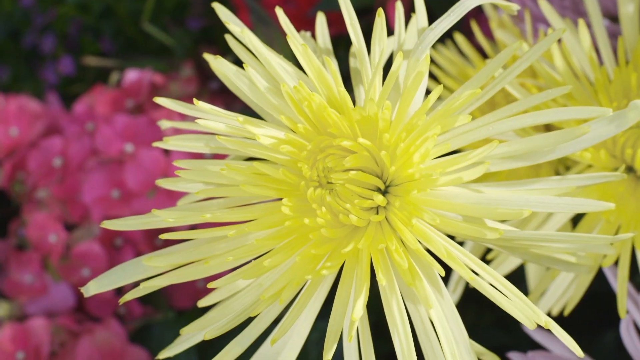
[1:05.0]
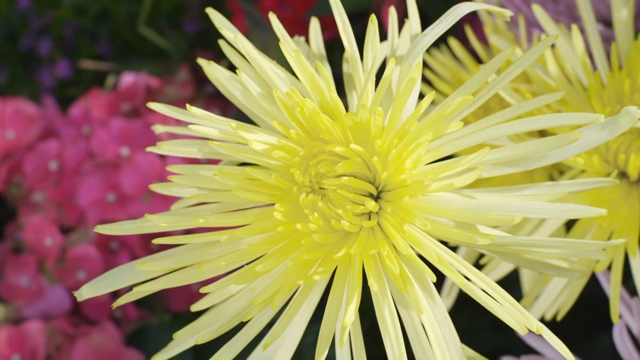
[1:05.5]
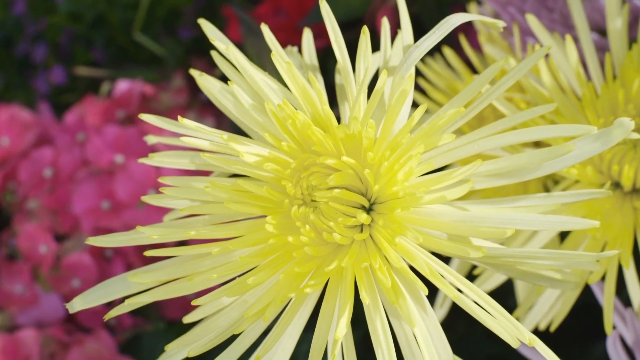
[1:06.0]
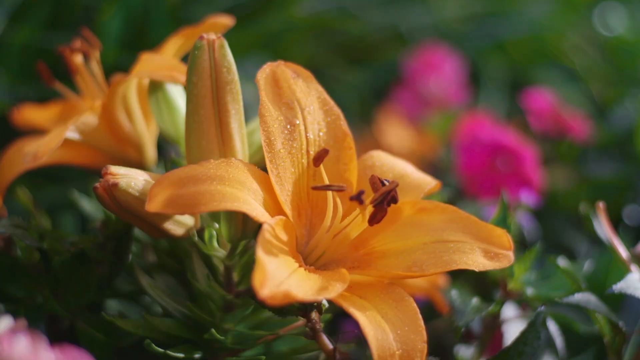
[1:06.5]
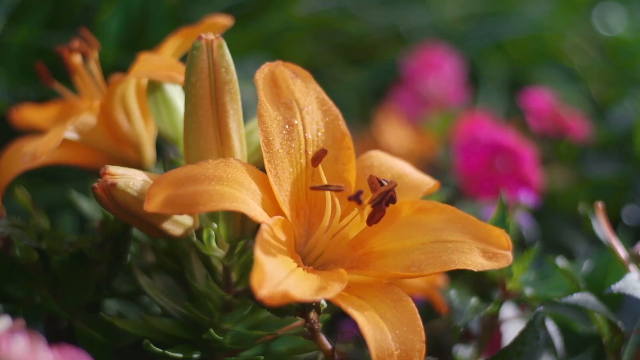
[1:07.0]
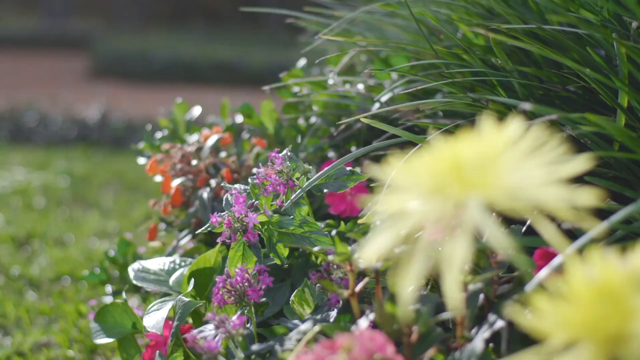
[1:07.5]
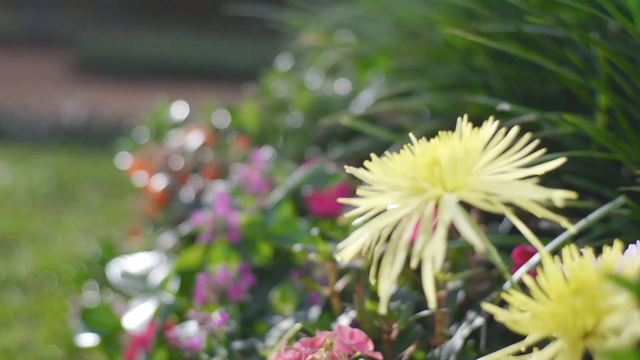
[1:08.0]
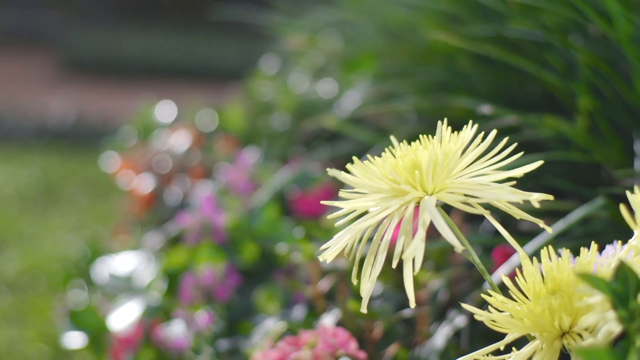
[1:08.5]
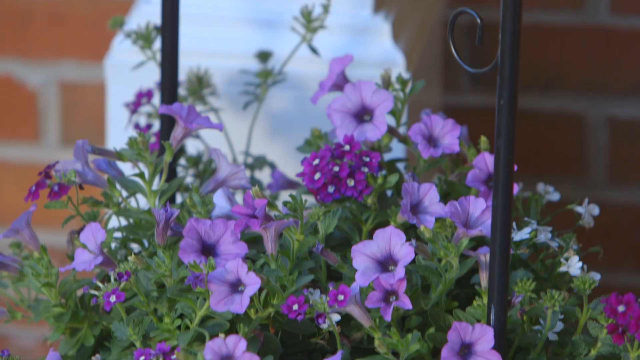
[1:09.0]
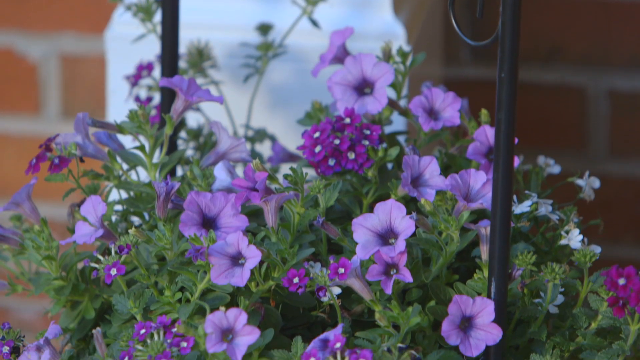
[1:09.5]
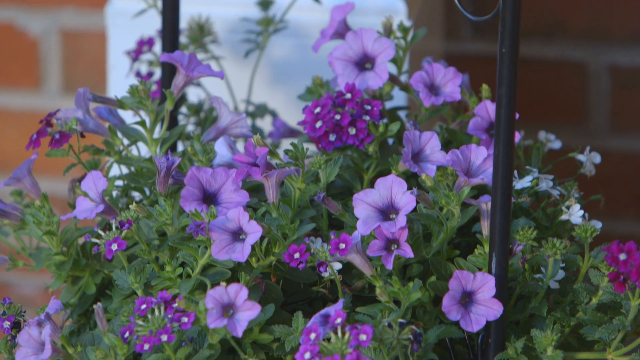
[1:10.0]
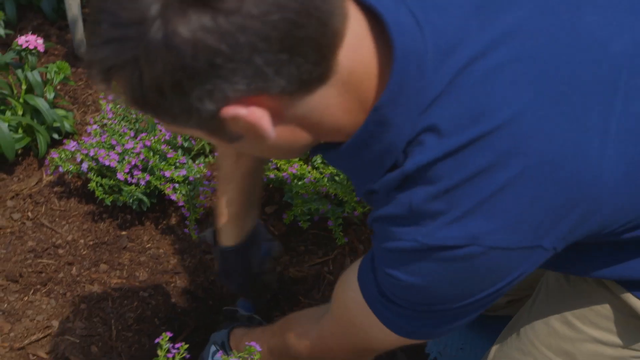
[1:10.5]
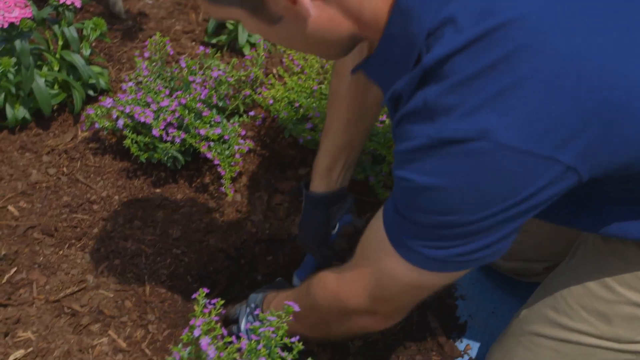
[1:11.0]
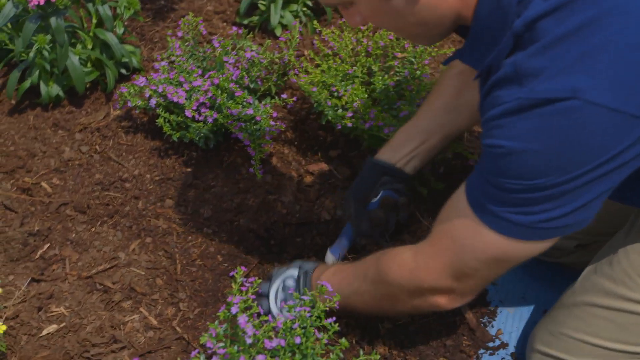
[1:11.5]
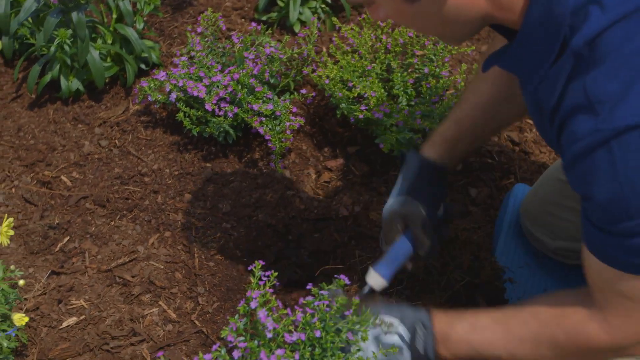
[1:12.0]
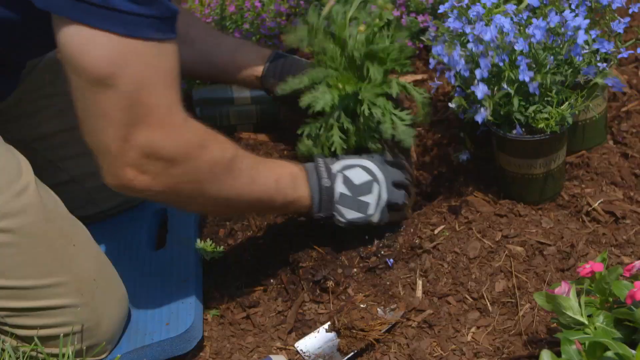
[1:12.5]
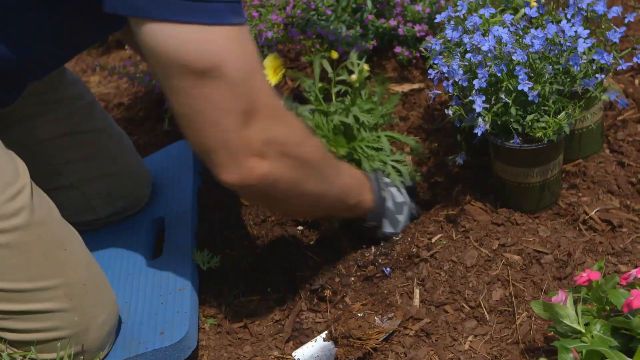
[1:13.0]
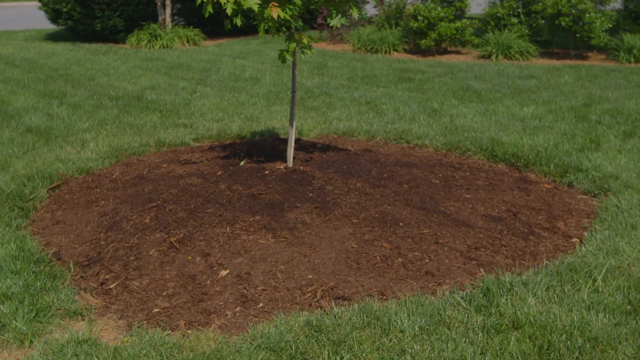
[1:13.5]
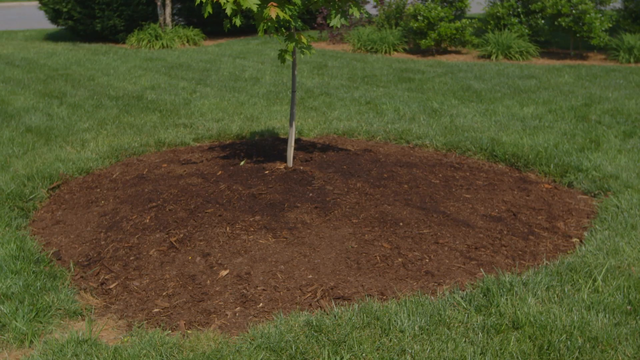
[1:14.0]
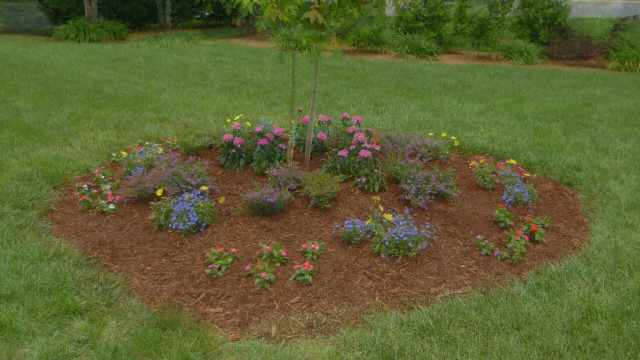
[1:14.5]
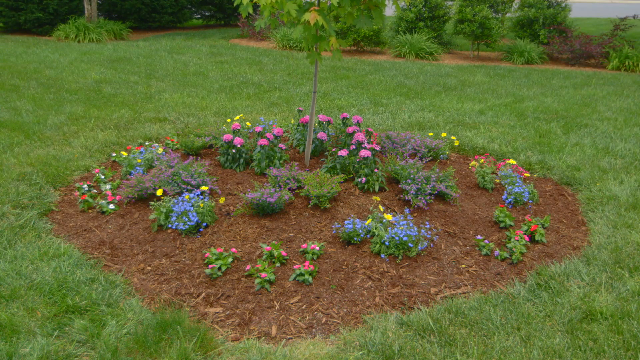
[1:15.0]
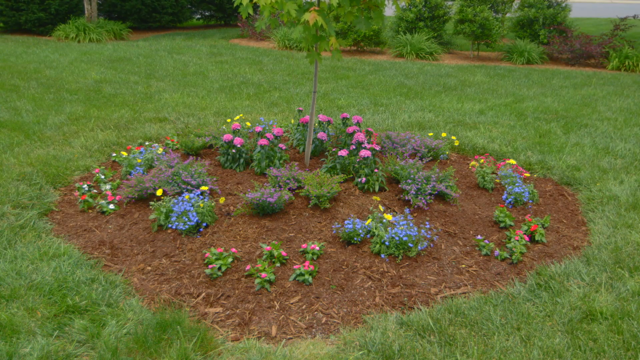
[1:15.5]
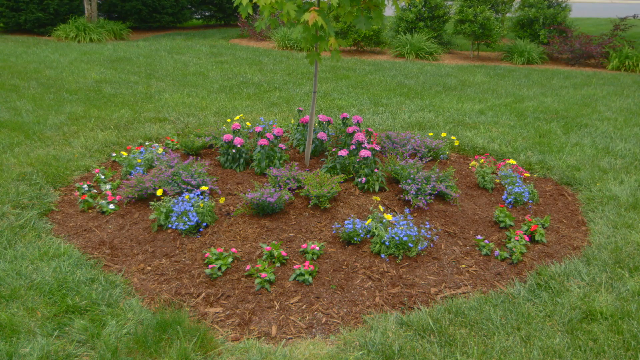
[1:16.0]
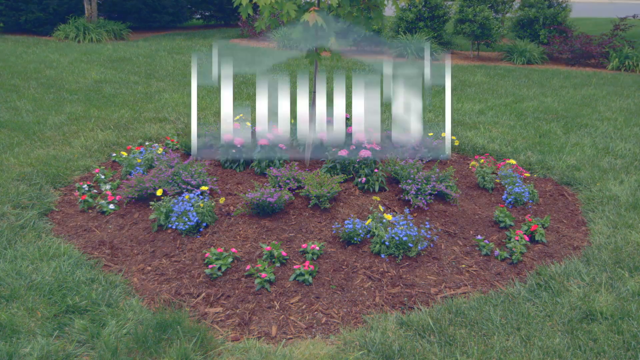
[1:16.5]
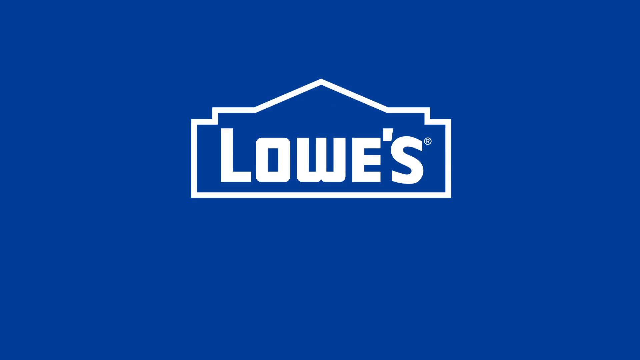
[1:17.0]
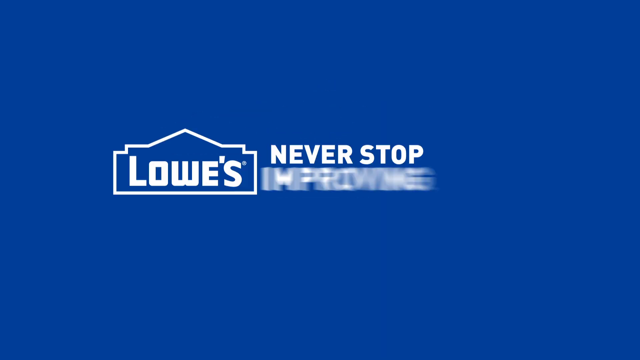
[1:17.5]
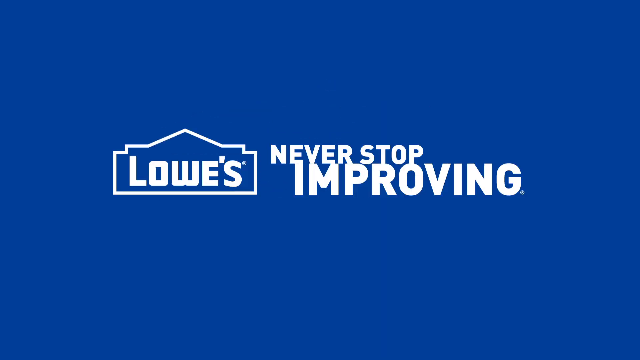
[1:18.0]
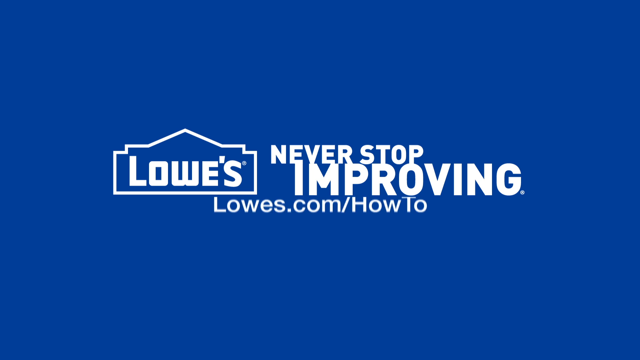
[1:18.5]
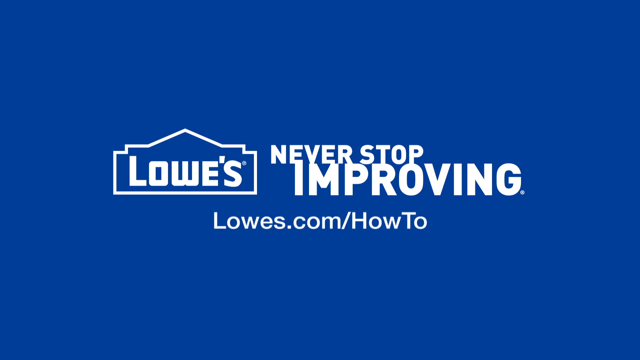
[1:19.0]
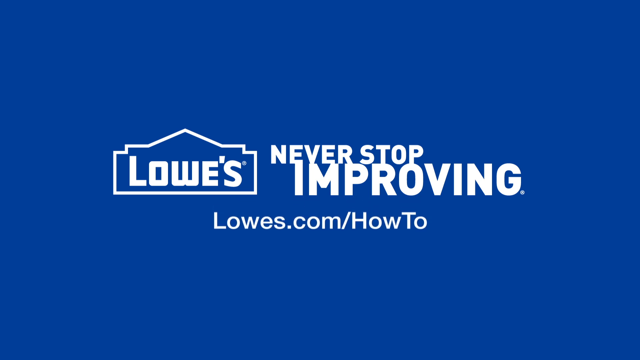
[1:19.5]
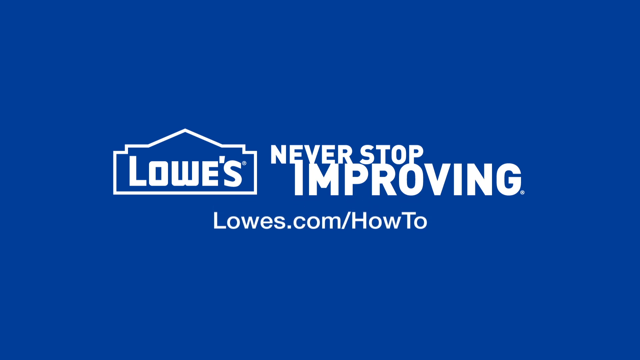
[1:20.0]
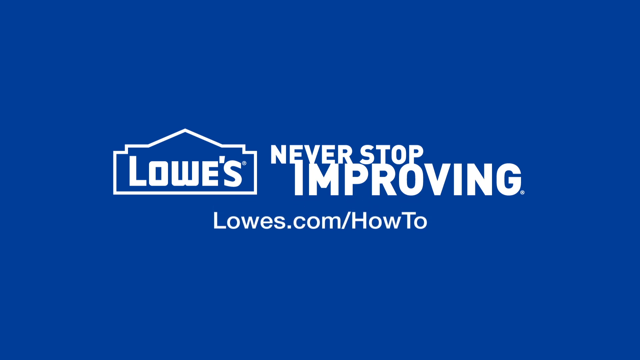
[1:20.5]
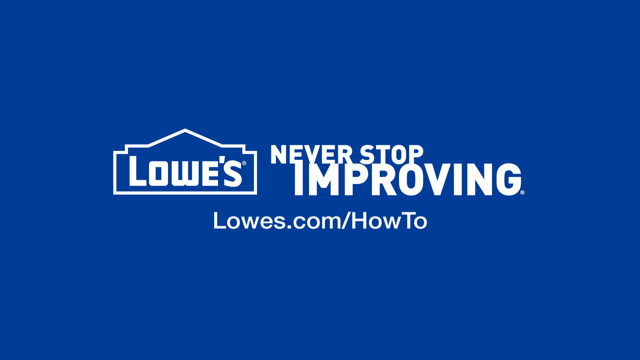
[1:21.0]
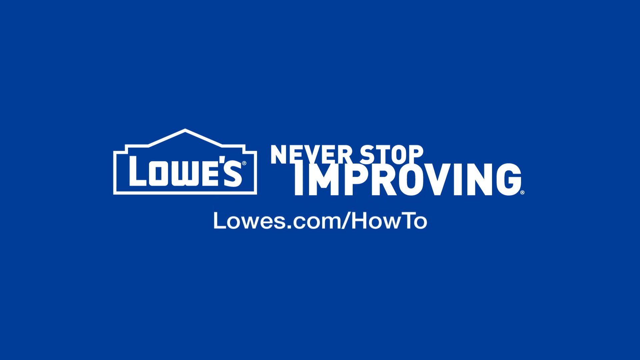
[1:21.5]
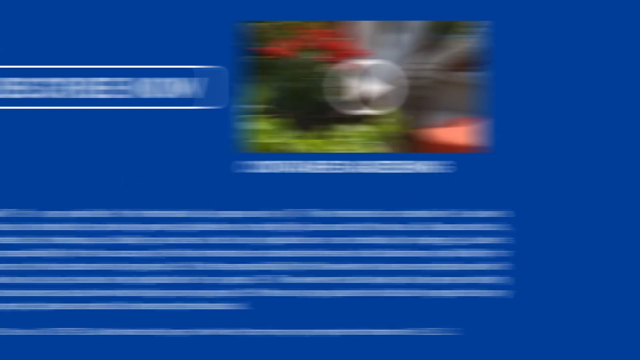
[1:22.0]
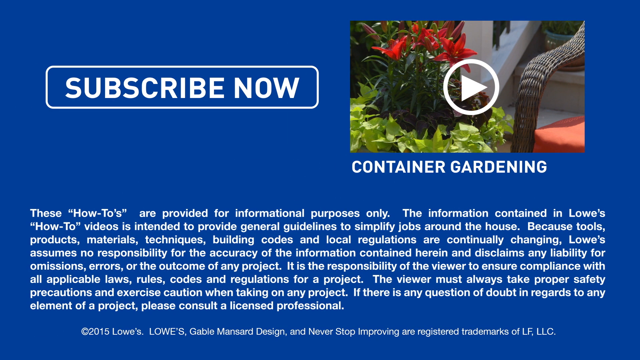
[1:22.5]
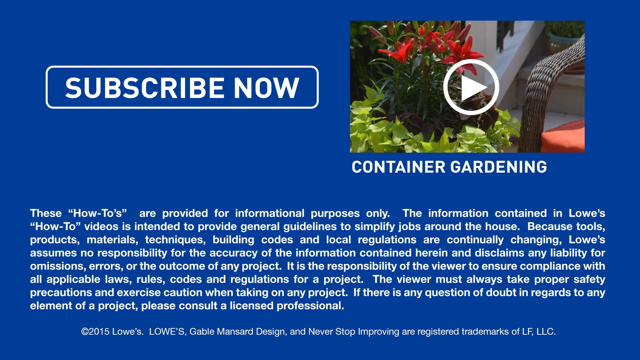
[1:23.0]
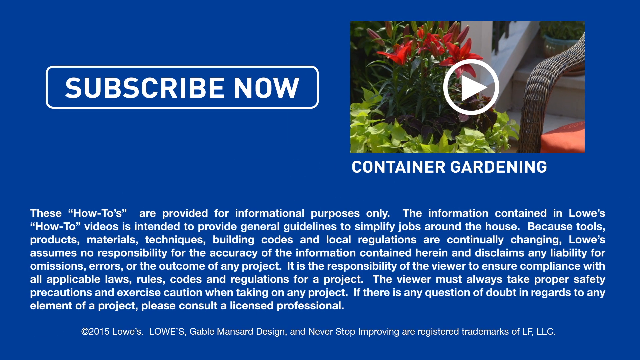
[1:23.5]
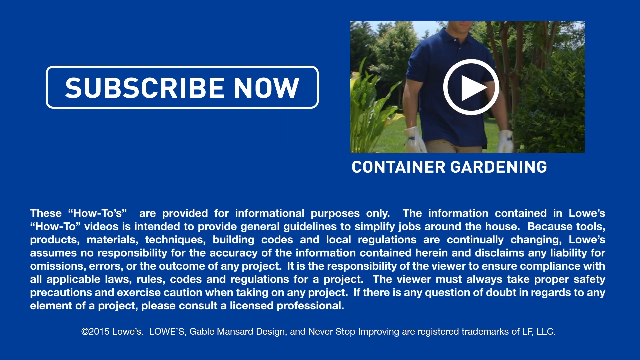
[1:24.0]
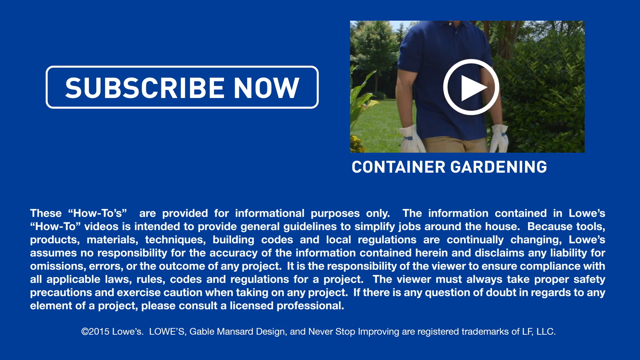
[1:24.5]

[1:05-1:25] A close-up shows a large yellow flower, which transitions to an orange flower with a few blurred pink flowers in the background on the right. Another close-up shows yellow flowers with various other flowers, such as purple and white ones, blurred in the background. The light purple and dark purple flowers appear in another close-up as the camera pans down. A man digs into the dirt, and then he twists some flowers into the dirt. A before-and-after of a circular portion of the yard follows: first it is just dirt, and then it shows areas of flowers of various colors planted. An ending credit scene shows the Lowe's logo on a blue background, with "Never Stop Improving" next to it and the website "Lowes.com/HowTo" below. The final screen asks viewers to subscribe now and says that these "How-To's" are provided for informational purposes only.